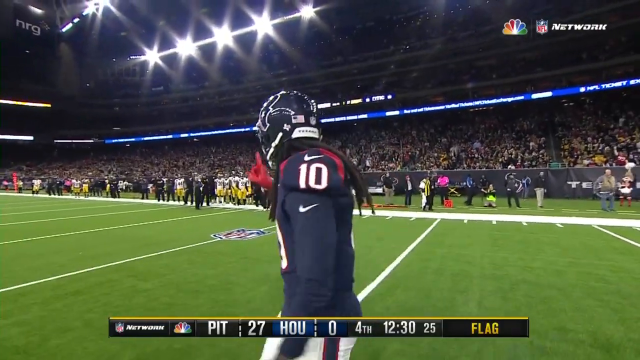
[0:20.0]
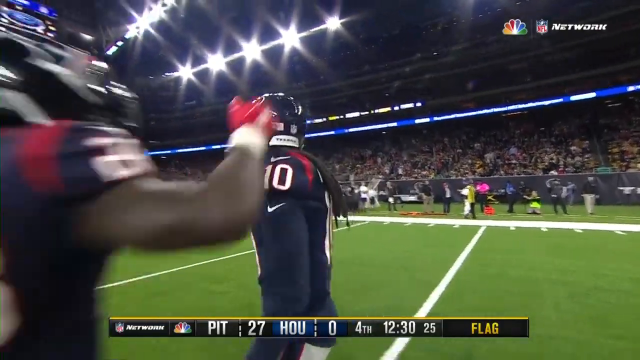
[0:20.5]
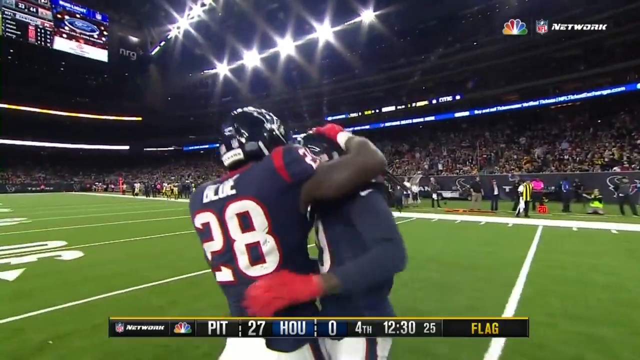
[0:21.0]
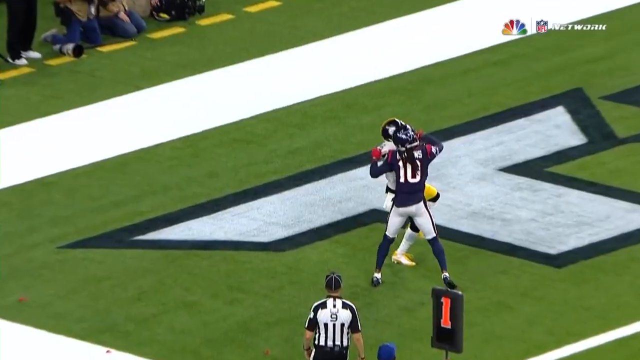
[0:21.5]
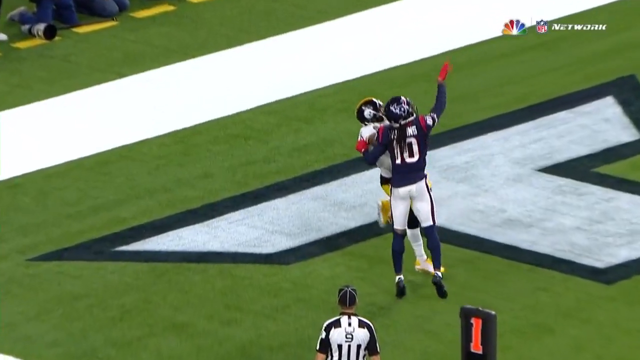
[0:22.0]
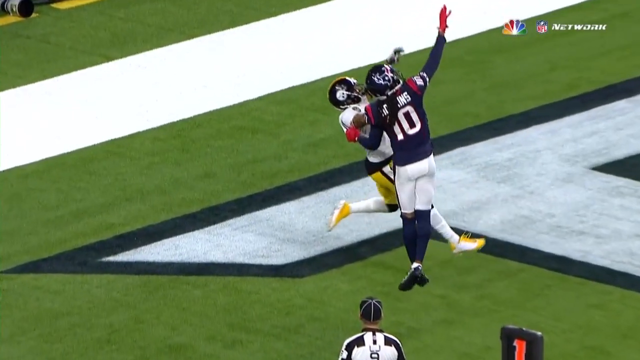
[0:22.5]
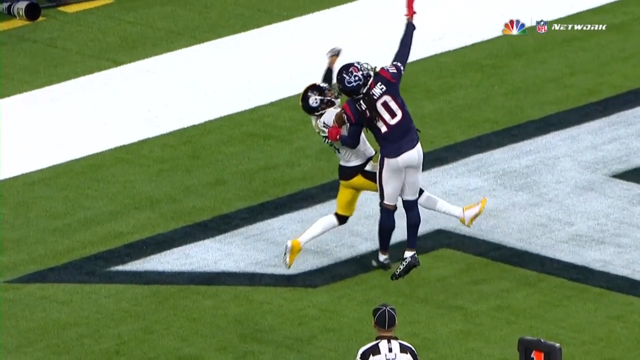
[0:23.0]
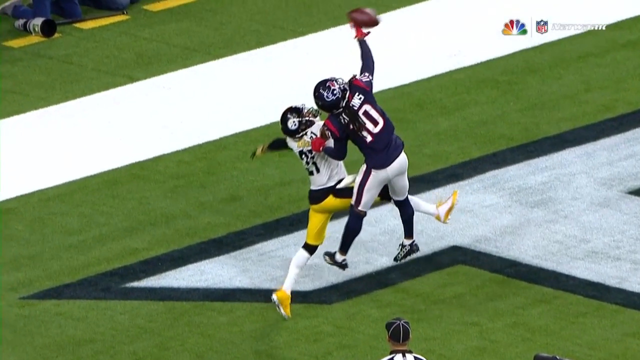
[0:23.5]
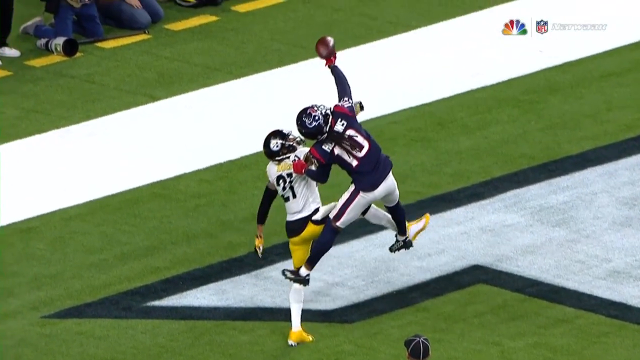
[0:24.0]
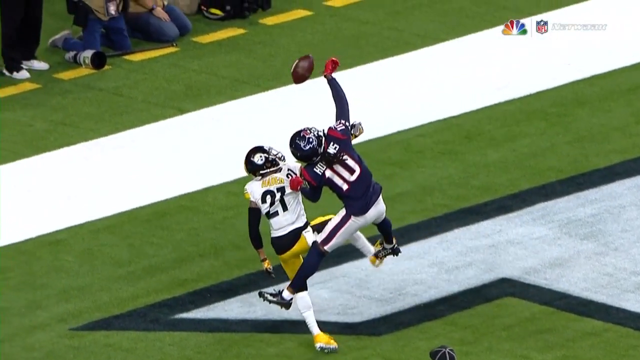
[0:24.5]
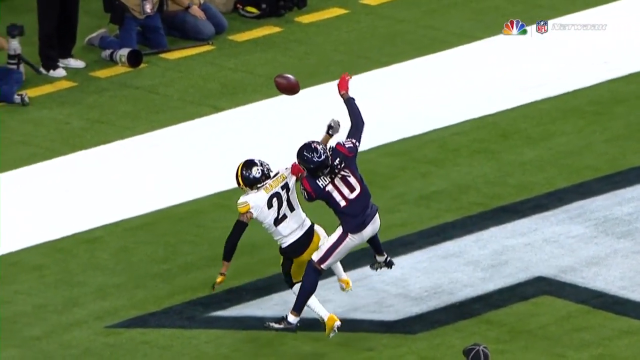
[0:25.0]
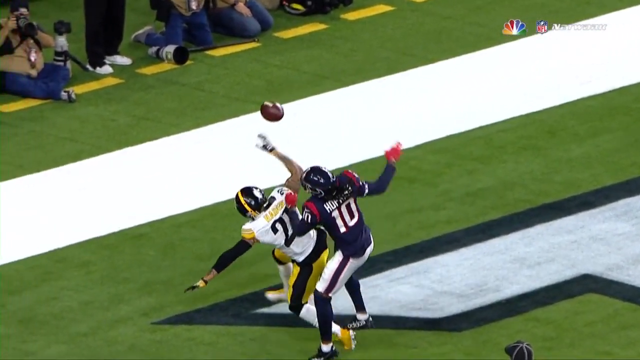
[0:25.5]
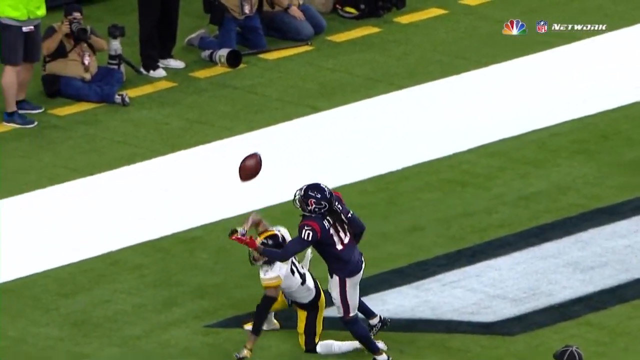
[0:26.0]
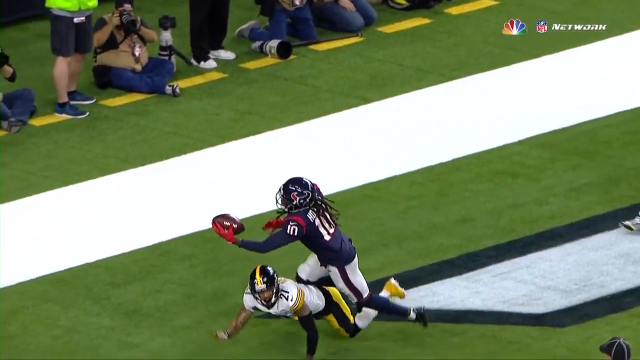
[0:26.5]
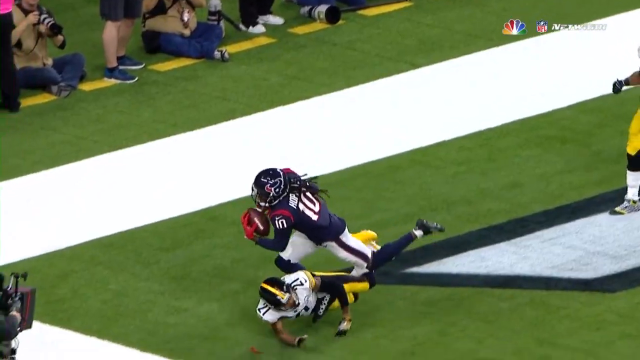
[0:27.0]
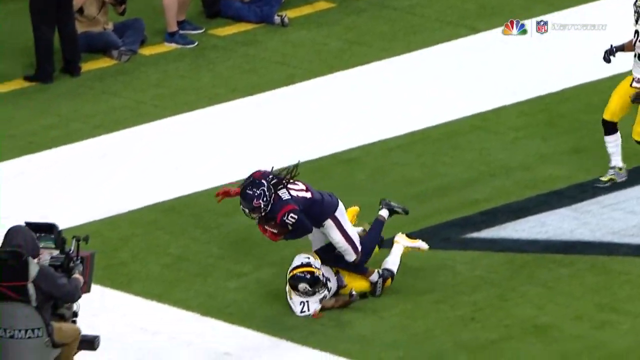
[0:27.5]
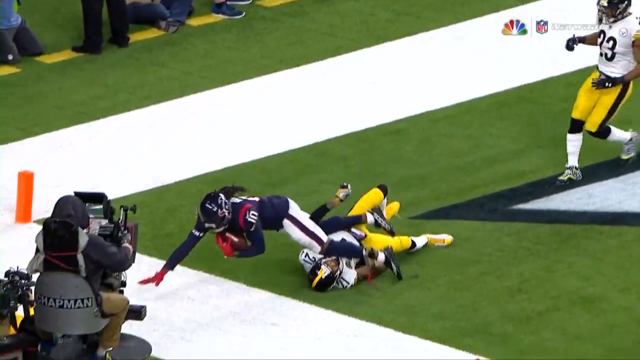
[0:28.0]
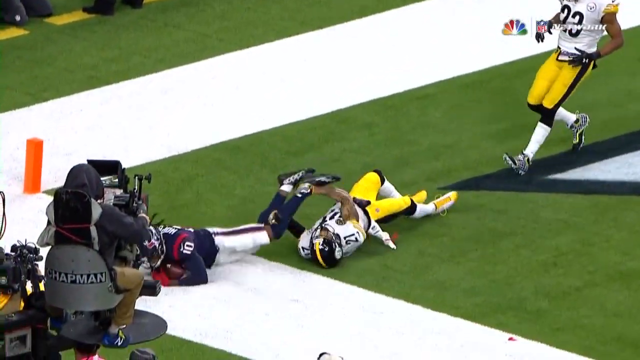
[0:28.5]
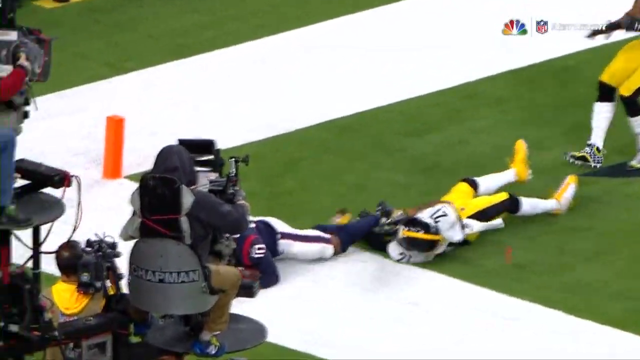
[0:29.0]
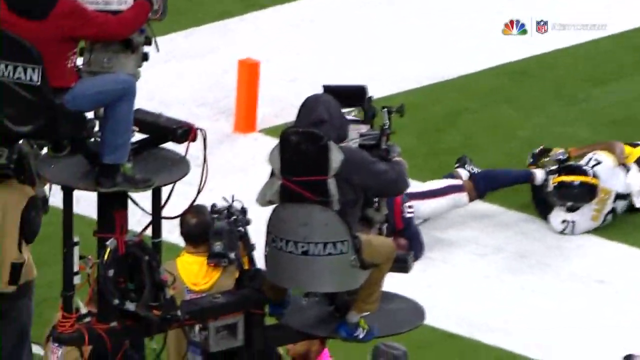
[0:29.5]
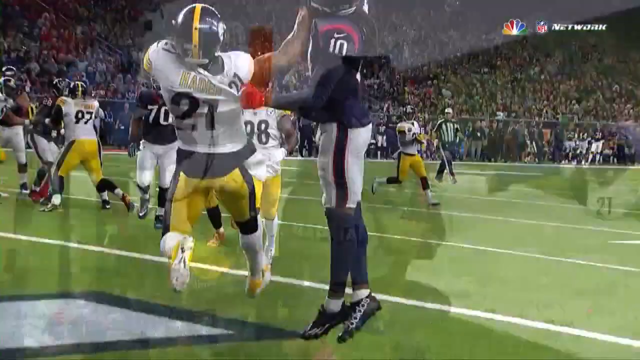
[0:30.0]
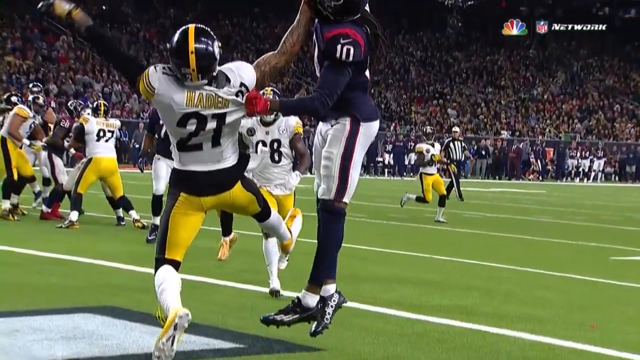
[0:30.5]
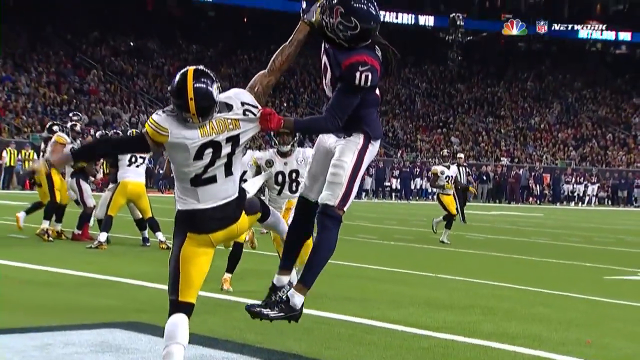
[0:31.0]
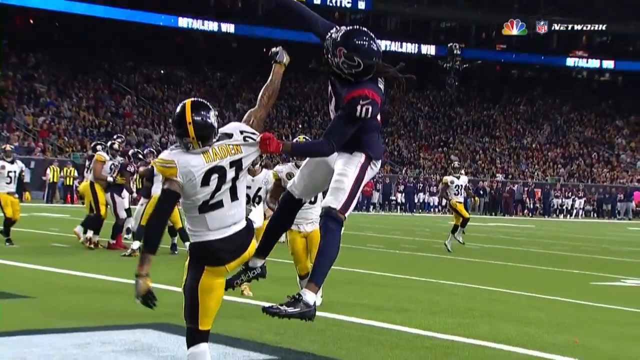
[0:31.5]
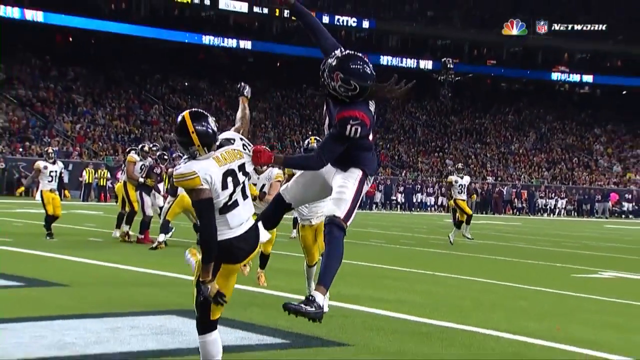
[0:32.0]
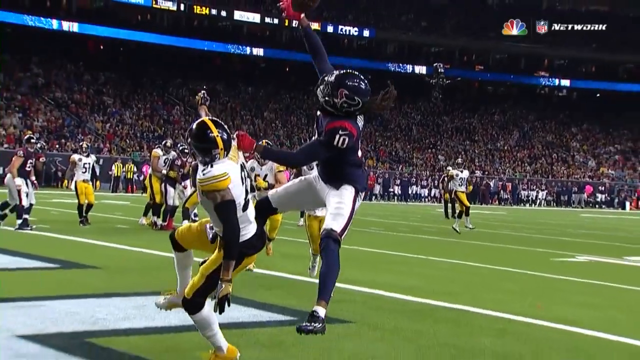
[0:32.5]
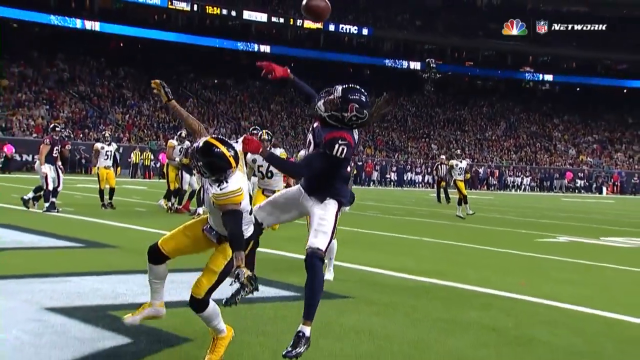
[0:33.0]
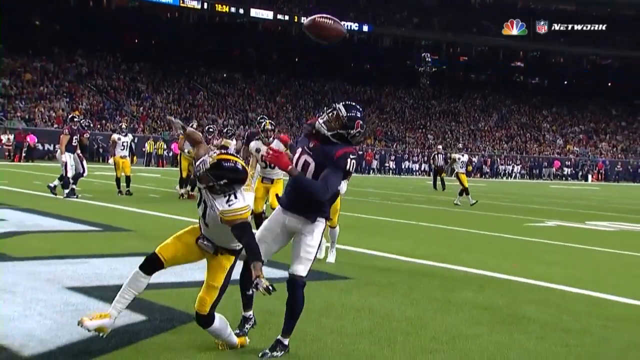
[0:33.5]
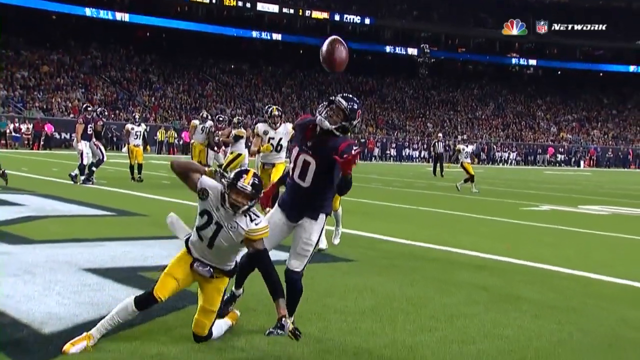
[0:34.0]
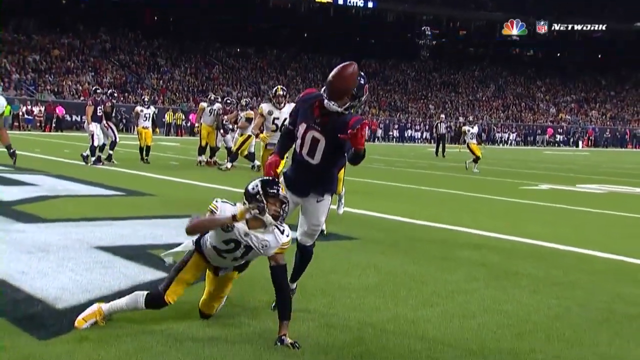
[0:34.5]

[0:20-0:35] DeAndre Hopkins, playing for the Texans against the Steelers, makes a catch in the end zone on what is sort of a fade to the left sideline, with the cornerback all up on him. Hopkins jumps, tips the ball with his right hand, then grabs it one-handed with his left hand and comes down with it. Whether his feet came down inbounds is questionable, and it seems he may not have gotten inbounds. The score is briefly shown as 27 to nothing for the Steelers, in the fourth quarter.